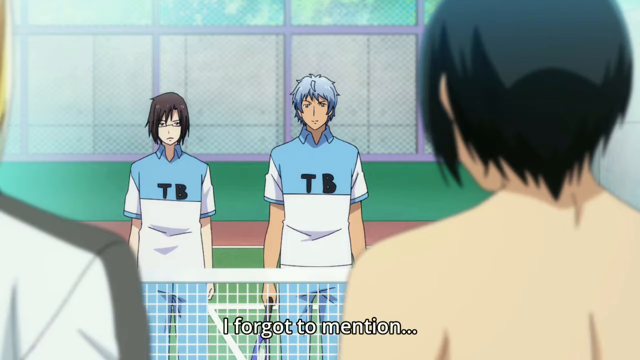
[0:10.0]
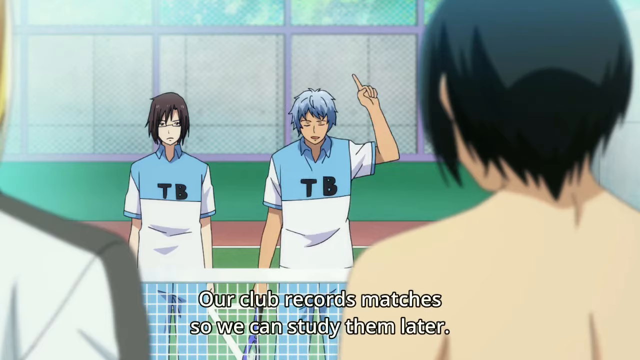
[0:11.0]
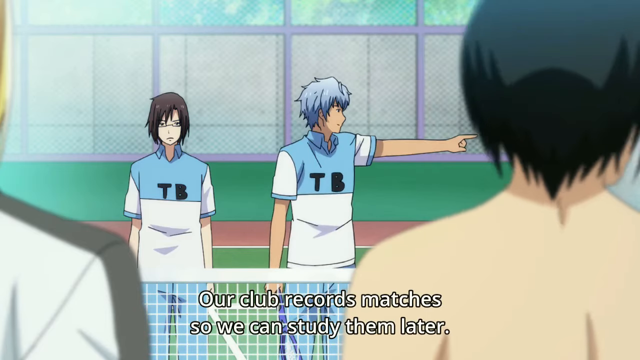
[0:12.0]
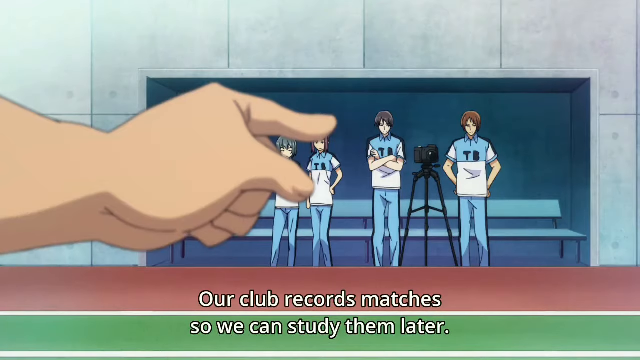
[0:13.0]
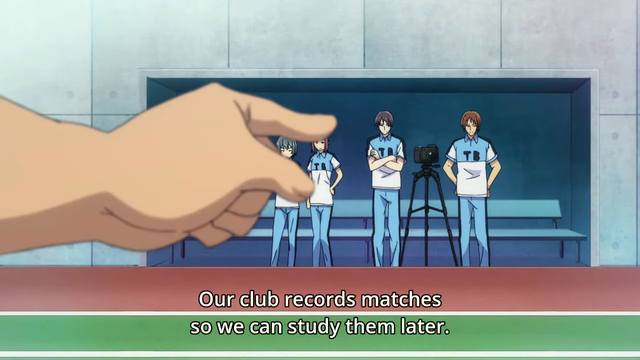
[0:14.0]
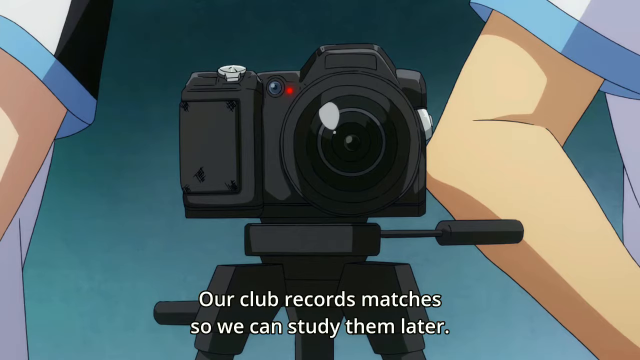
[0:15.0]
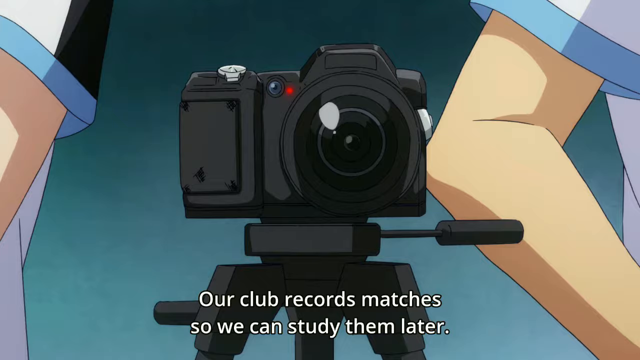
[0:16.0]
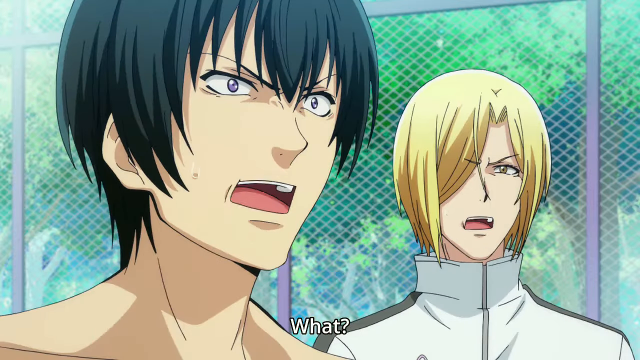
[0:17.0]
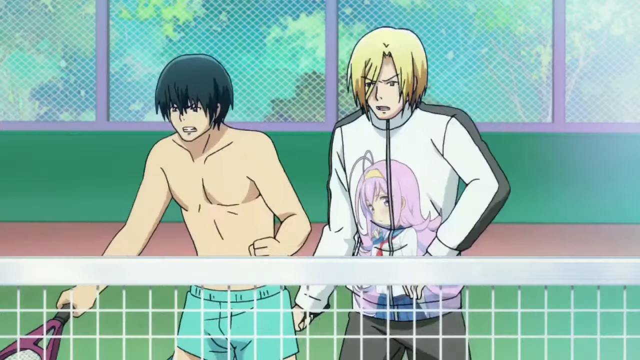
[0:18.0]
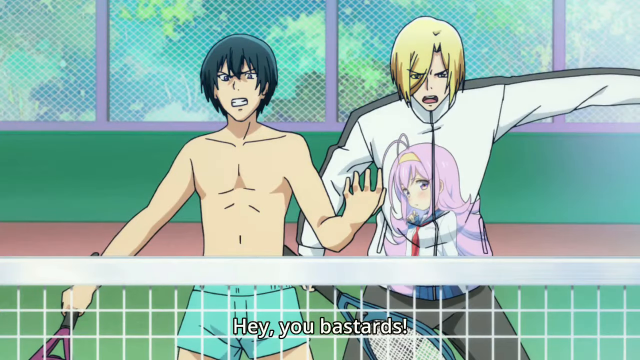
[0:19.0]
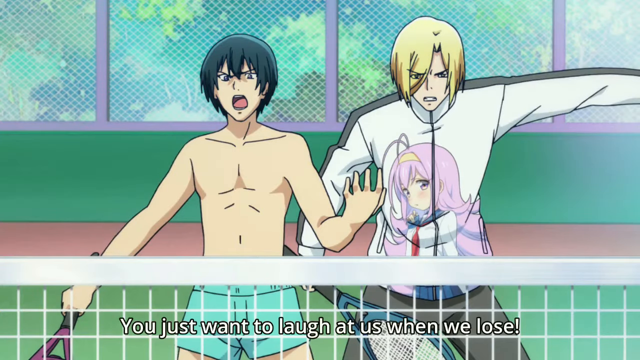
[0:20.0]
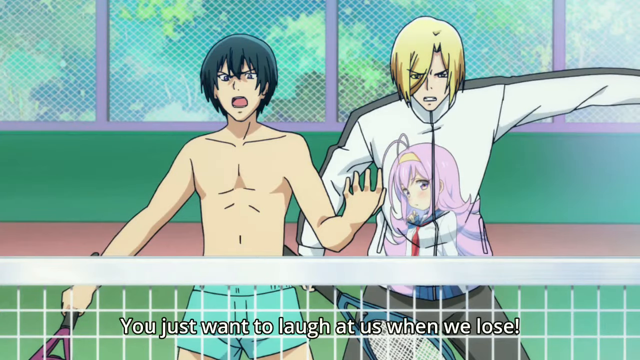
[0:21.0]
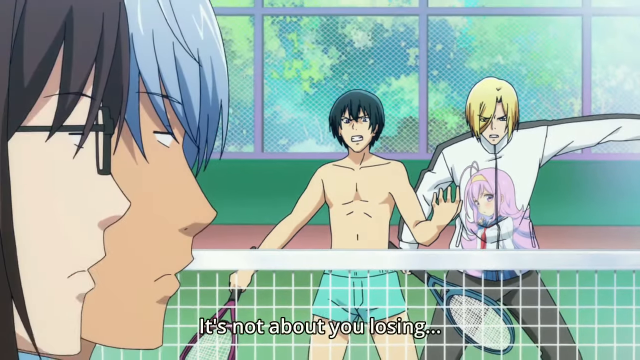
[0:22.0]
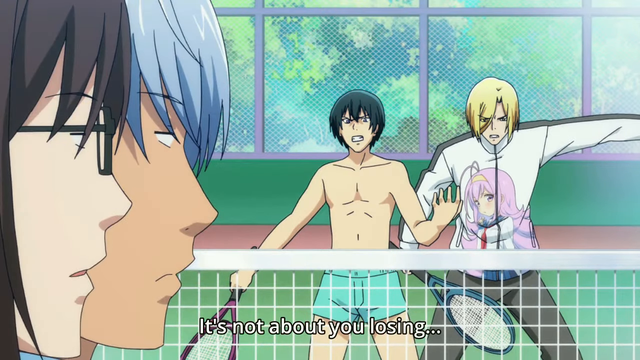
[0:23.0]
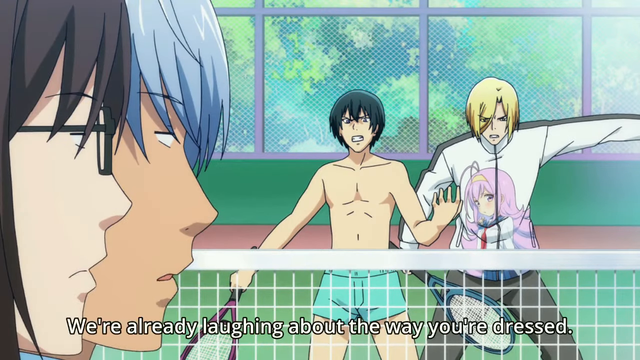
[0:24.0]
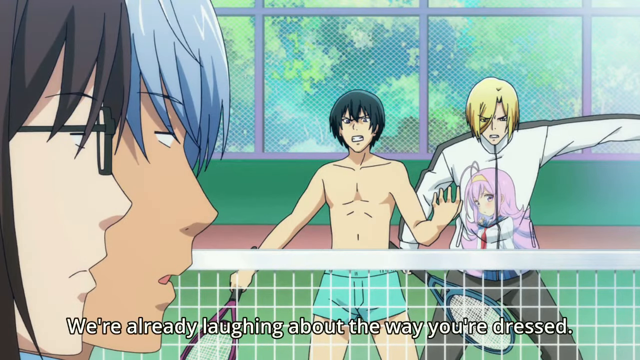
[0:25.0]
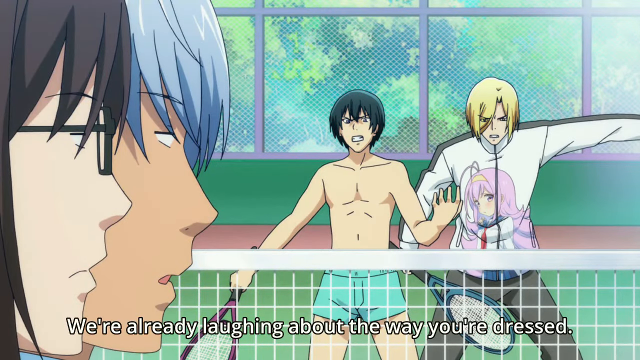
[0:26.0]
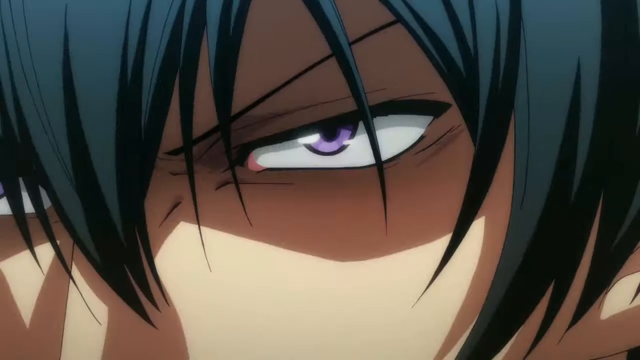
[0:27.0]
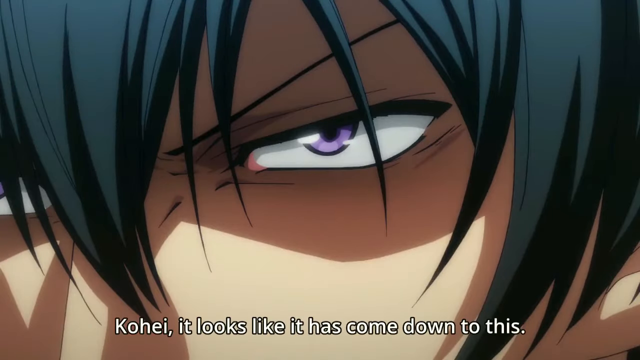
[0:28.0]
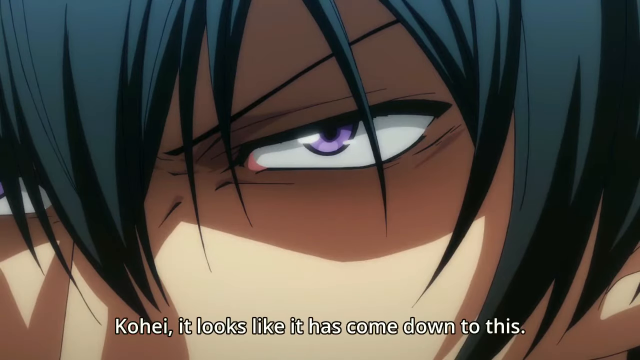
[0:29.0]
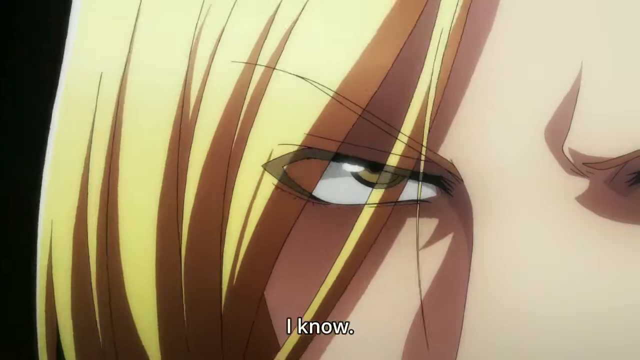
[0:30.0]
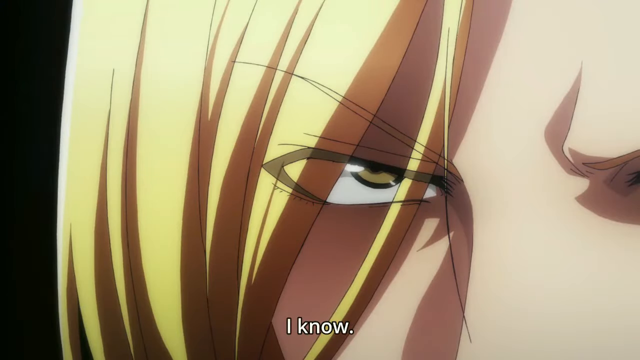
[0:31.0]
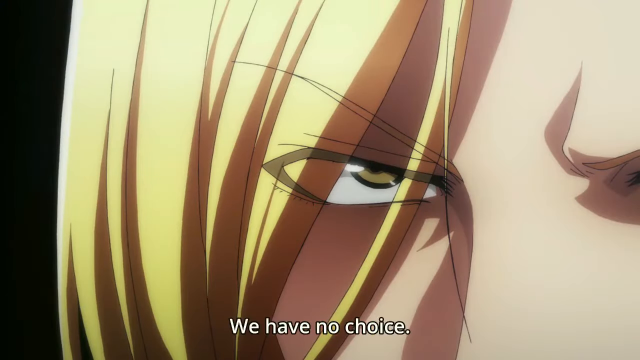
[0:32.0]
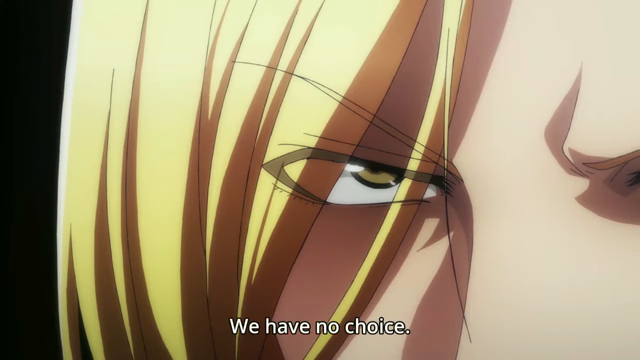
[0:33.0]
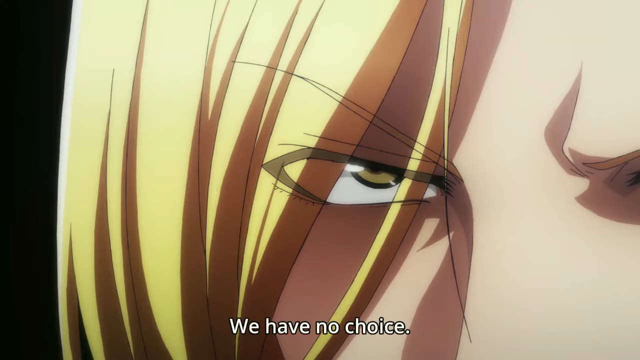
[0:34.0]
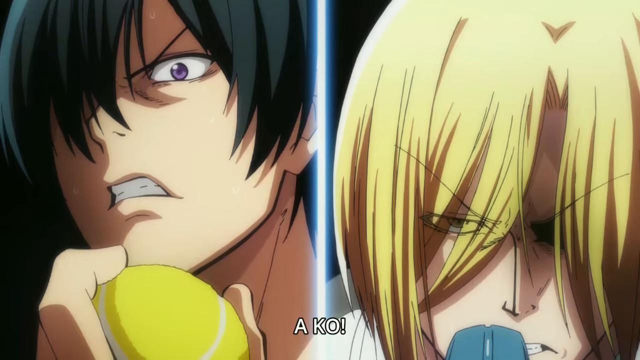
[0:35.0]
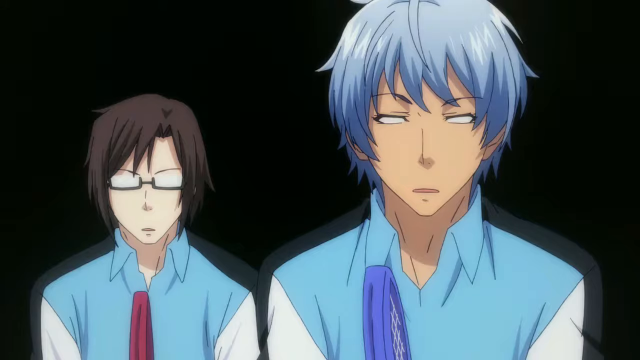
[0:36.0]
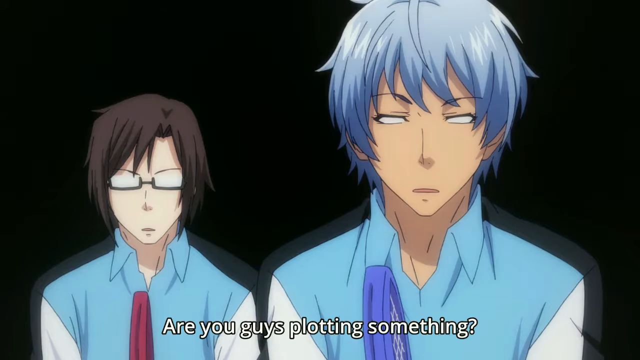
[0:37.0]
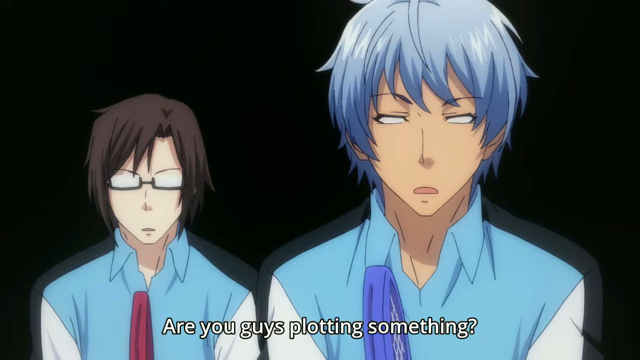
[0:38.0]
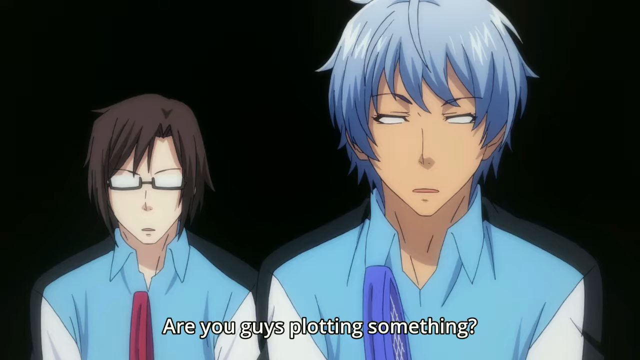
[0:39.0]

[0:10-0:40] In the animation, four people are playing a game of tennis. Two people with the letters "TB" written on their tops look at the screen; on this team are a woman with short brown hair and a man with short blue hair. Words come up saying "our club records matches so we can study them later," and one of them points to a viewing window where four people are standing, watching them play. An animated image of a camera follows: it is black and standing on a tripod. The view switches back to two people. One has short black hair, wears no top and has blue eyes; he is stood next to a woman with short blonde hair, and one of them wears a tracksuit top. They are standing in front of a chain link fence. The words on the bottom of the screen say "what?" The team is then shown angry and gesticulating, holding tennis rackets and standing in front of a net. They say to the other team, "you just want to laugh at us when we lose." The other team replies, "it's not about losing. We're already laughing about the way you're dressed." A close-up shows somebody's eye with black hair cascading over the front of the face, and the words say "Kohai, it looks like it has come down to this."